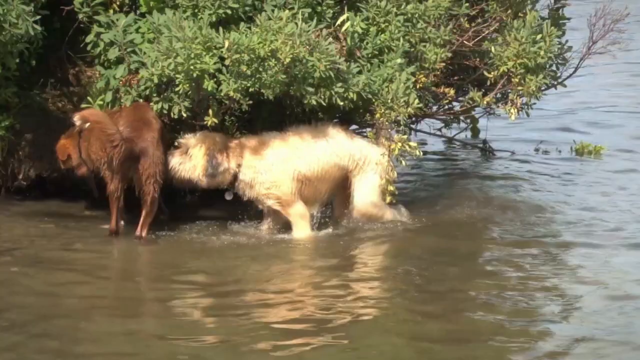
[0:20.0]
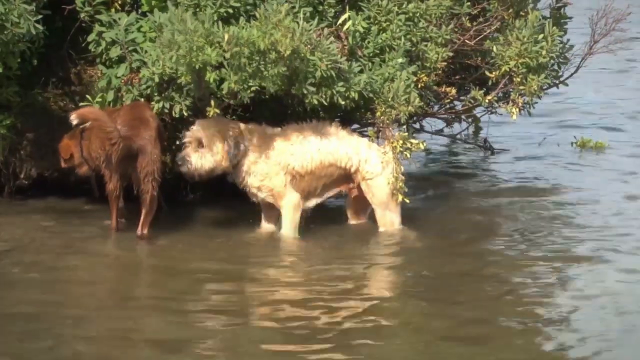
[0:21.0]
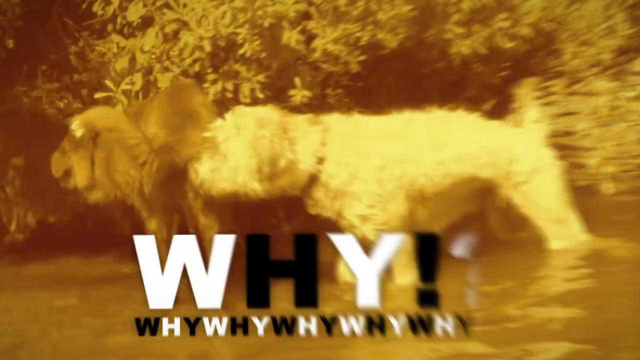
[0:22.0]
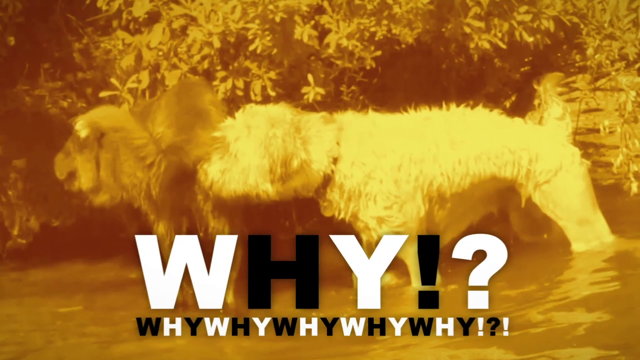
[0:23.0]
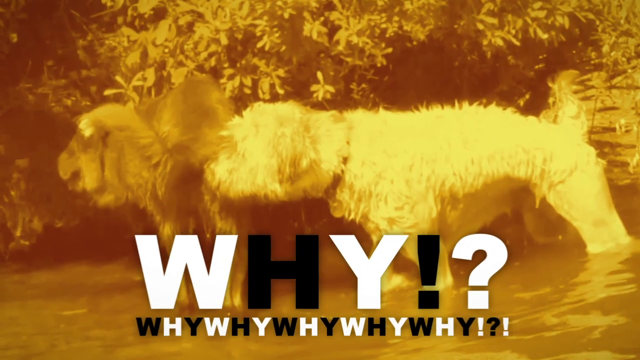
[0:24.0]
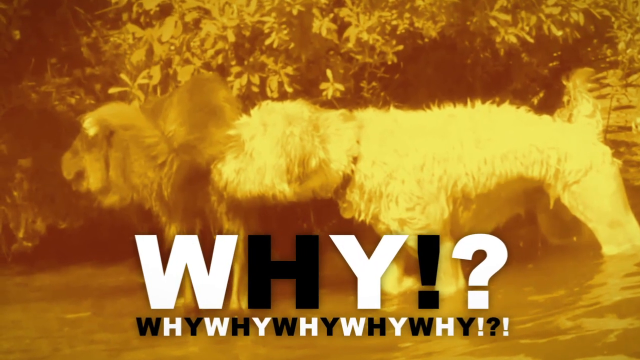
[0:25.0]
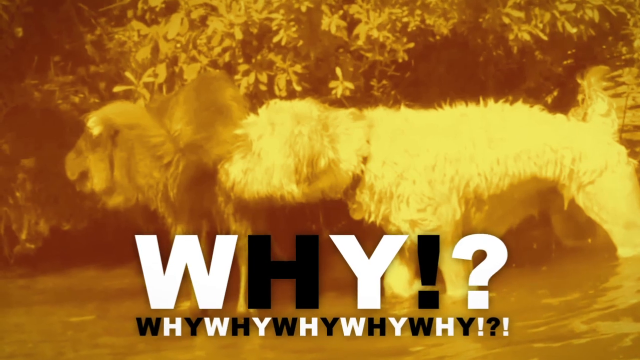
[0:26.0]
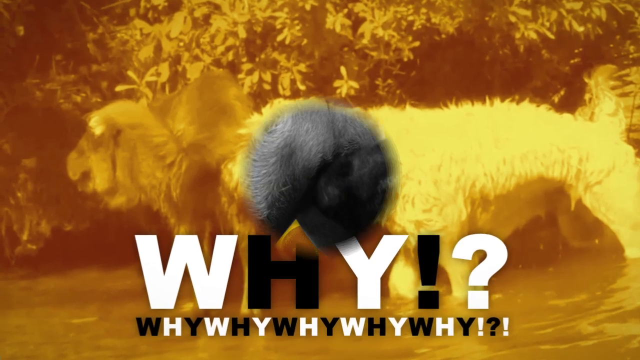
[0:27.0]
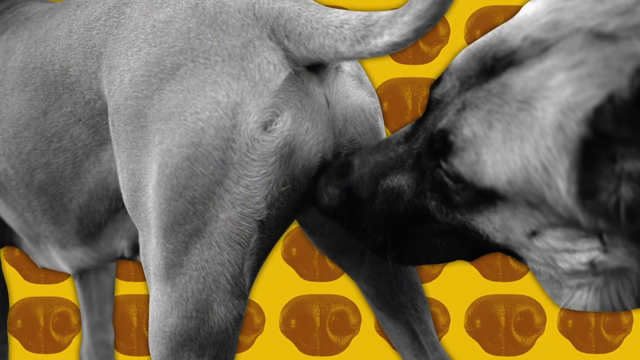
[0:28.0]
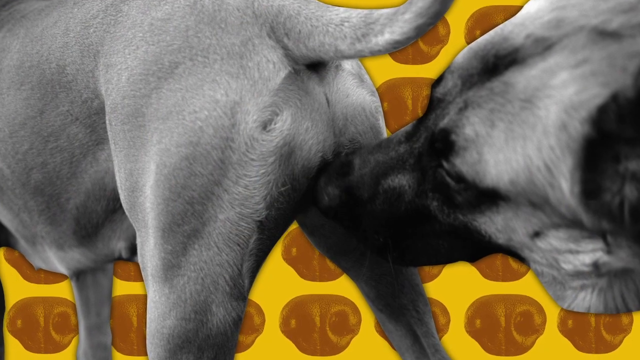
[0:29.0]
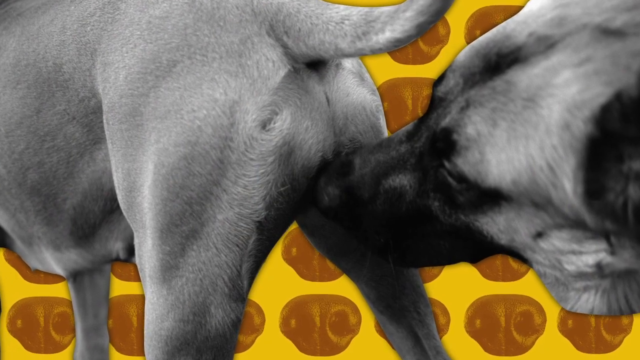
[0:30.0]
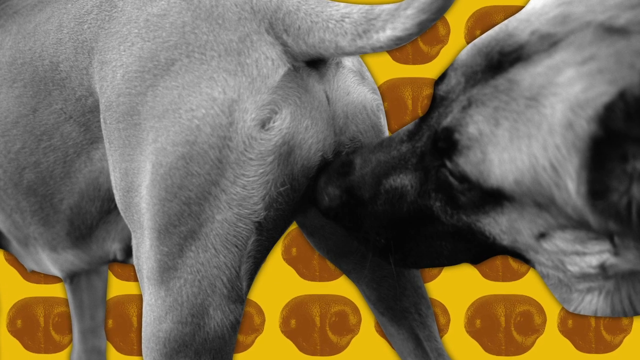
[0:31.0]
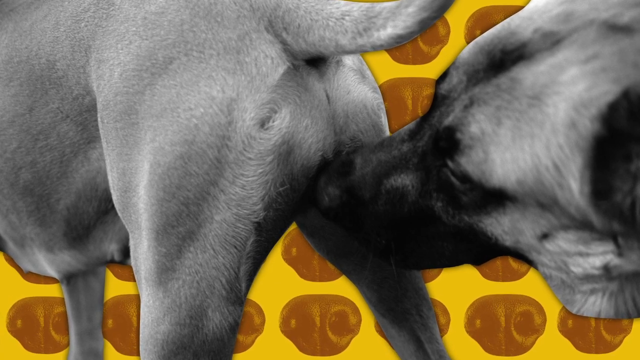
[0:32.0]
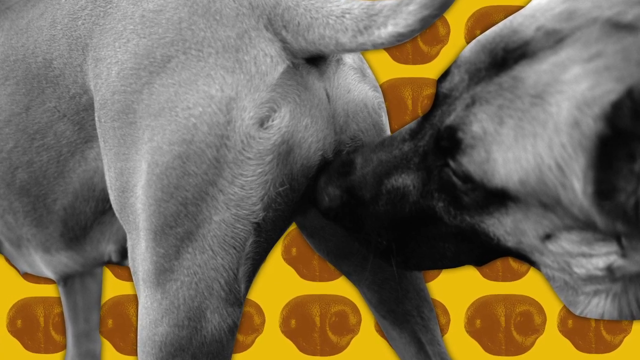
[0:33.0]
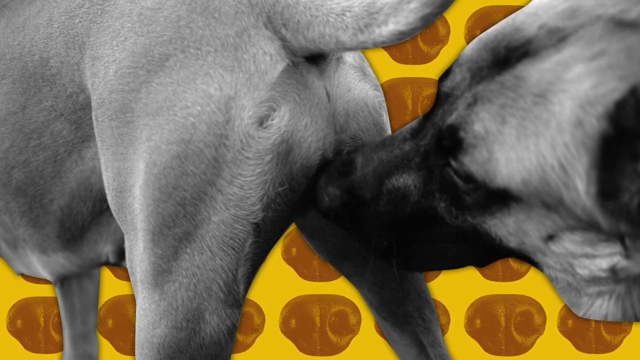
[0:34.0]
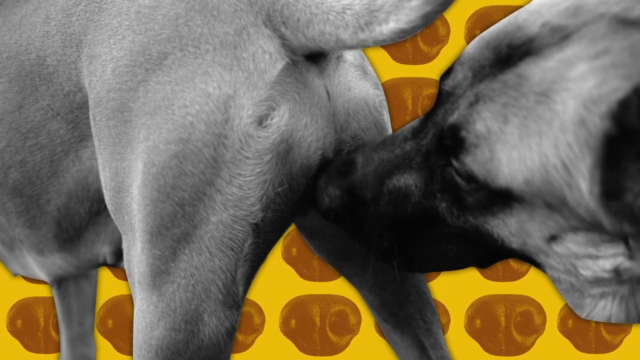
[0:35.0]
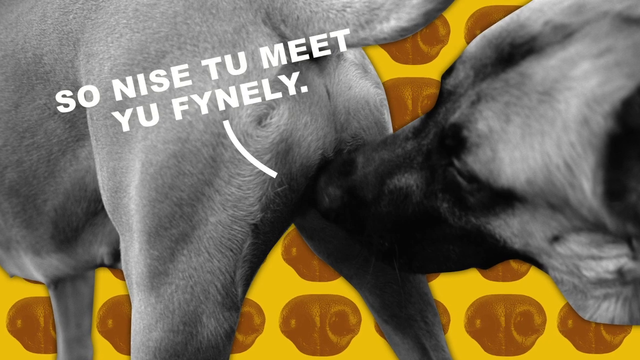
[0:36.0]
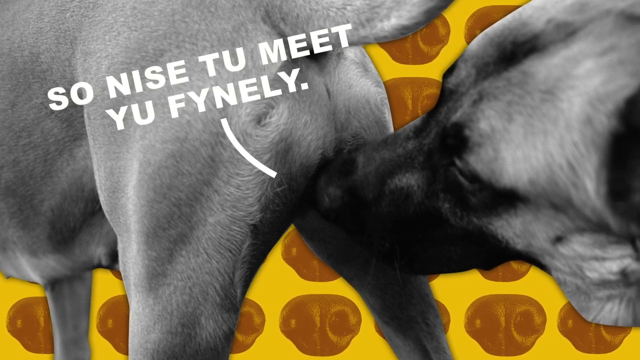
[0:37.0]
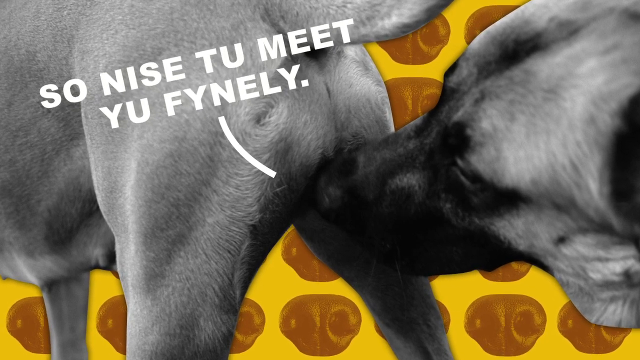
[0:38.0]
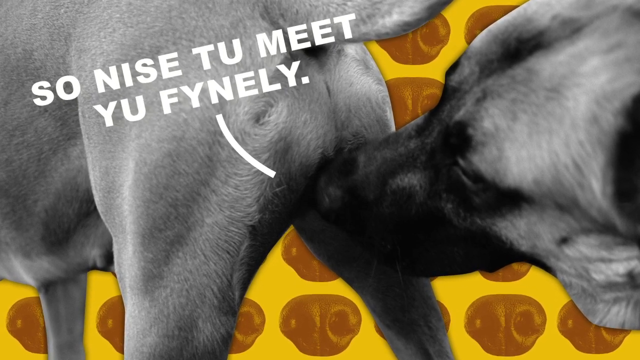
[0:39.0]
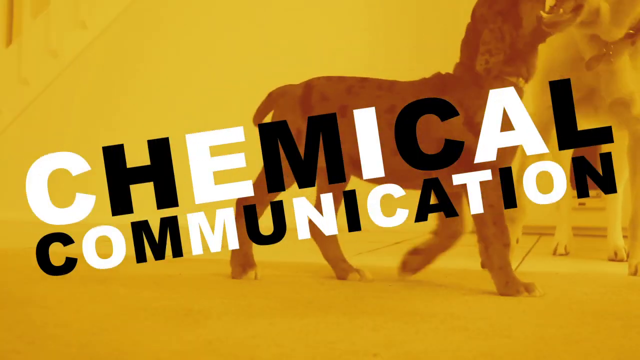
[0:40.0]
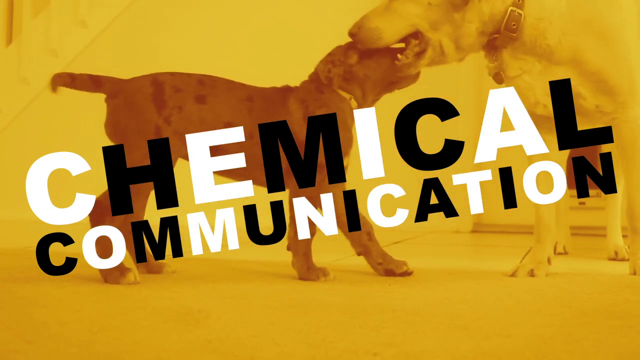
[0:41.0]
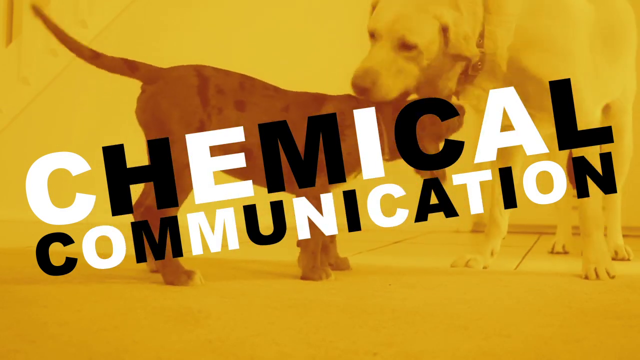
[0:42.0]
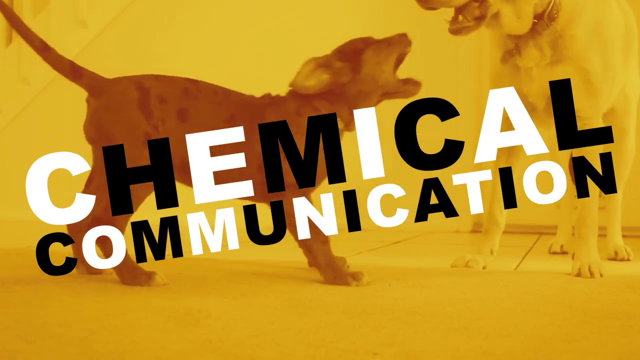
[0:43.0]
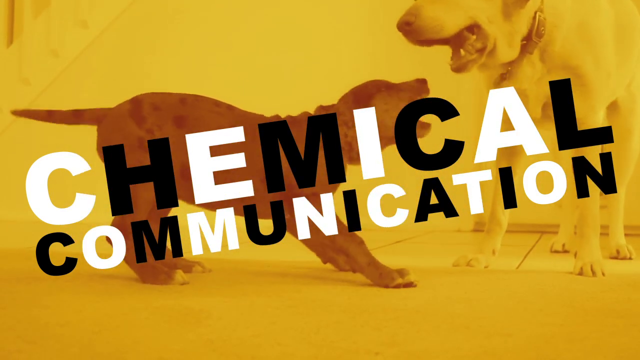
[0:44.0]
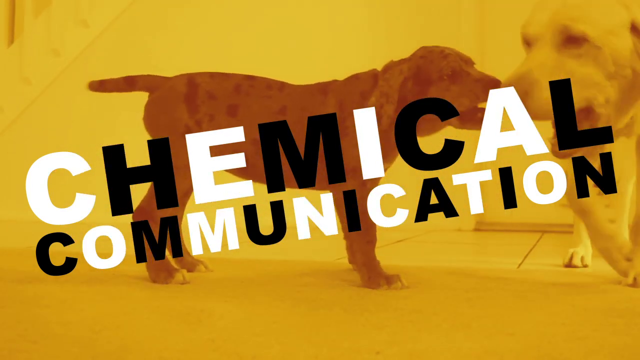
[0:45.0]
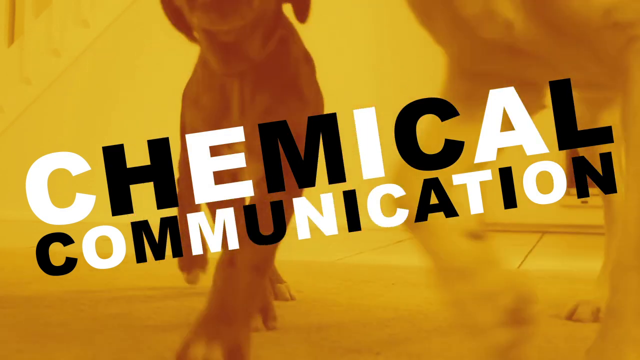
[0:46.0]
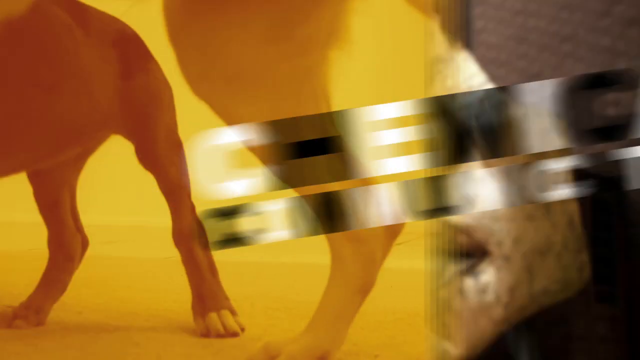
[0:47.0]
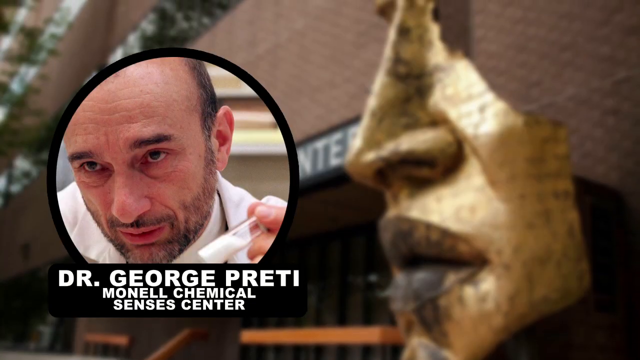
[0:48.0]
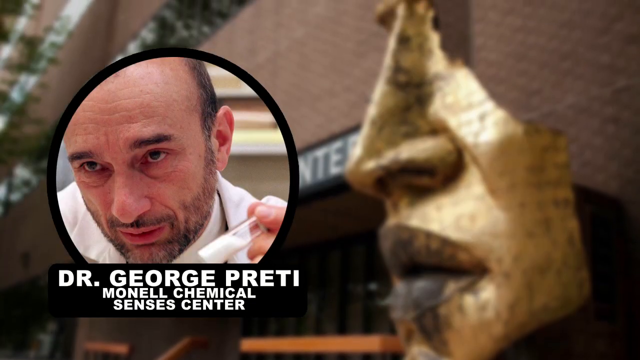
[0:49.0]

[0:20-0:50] Two dogs stand in what appears to be shallow water at the edge of either a river or a pond, and one dog sniffs the other dog's rear end. Text on the screen reads "why." Another image shows a different dog sniffing another dog's rear end, with on-screen text saying "so nice to meet you finally" written in dog speak, with the words spelled wrong. The next screen shows the words "chemical communication."